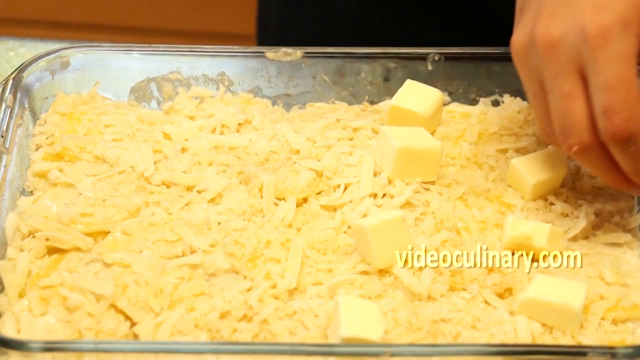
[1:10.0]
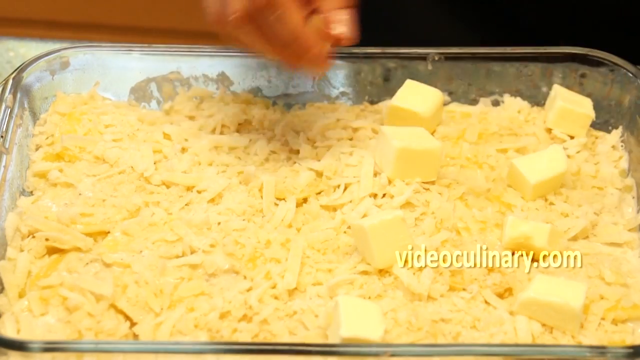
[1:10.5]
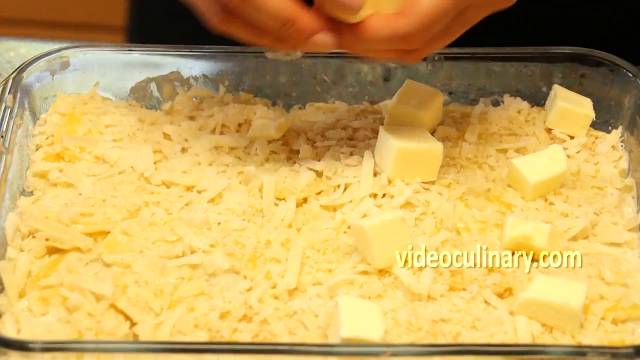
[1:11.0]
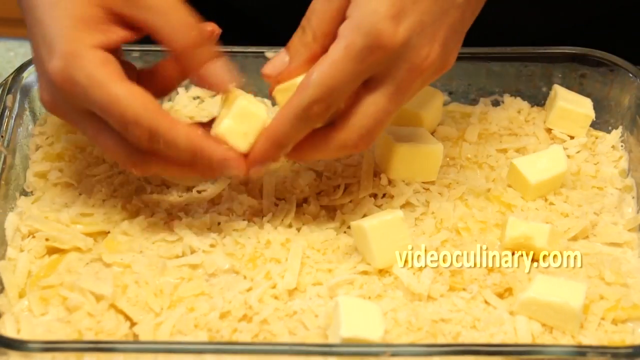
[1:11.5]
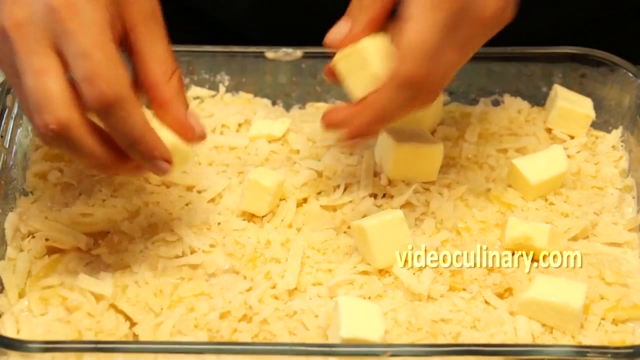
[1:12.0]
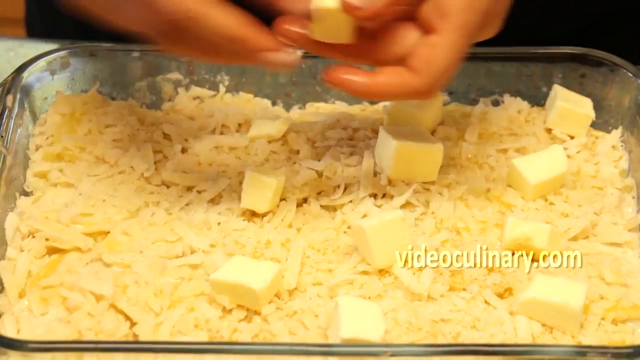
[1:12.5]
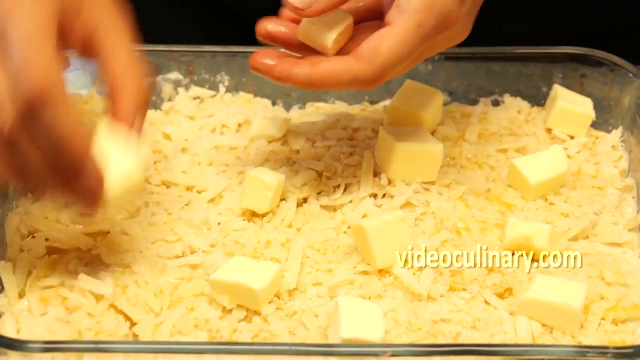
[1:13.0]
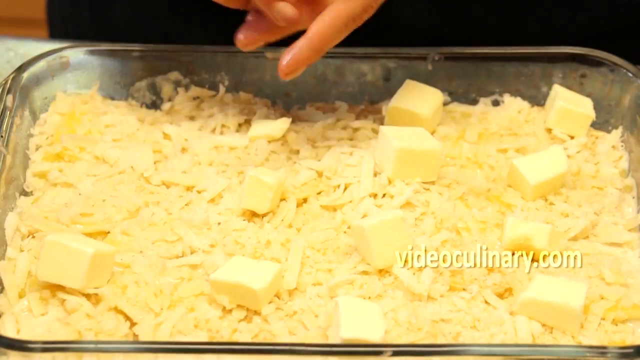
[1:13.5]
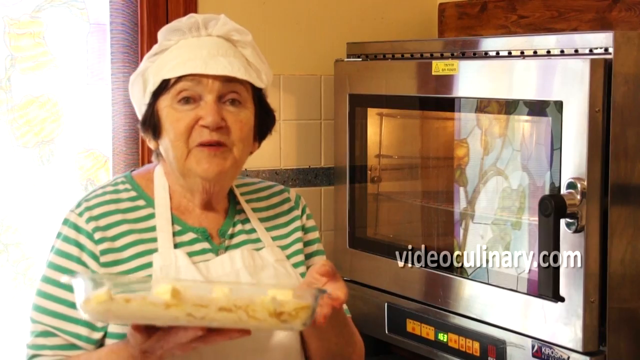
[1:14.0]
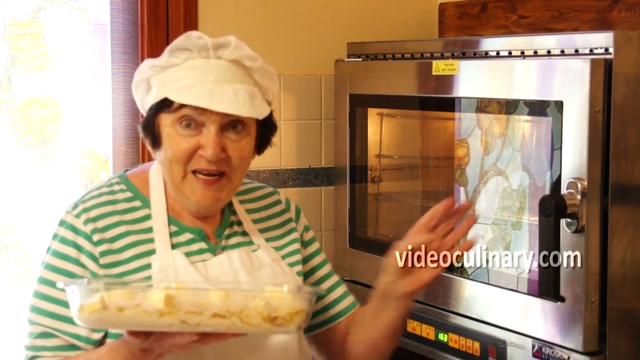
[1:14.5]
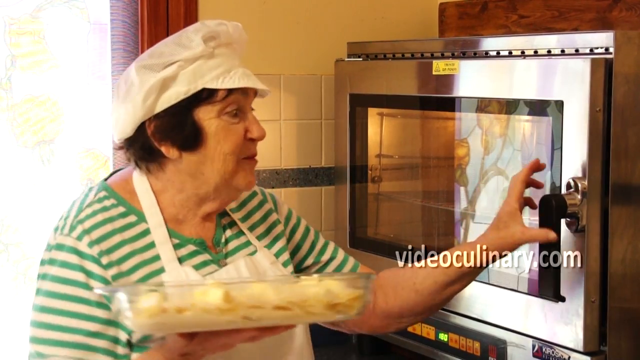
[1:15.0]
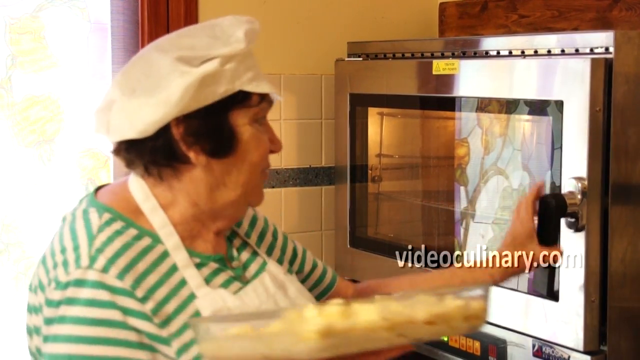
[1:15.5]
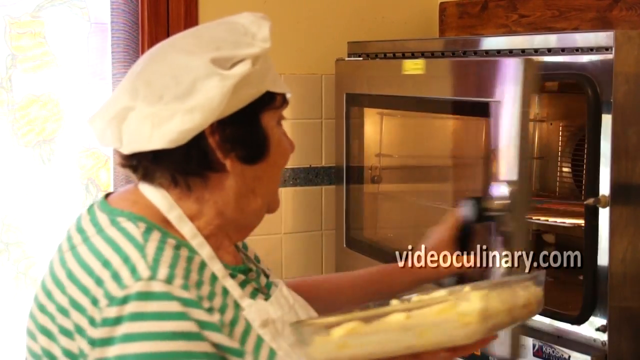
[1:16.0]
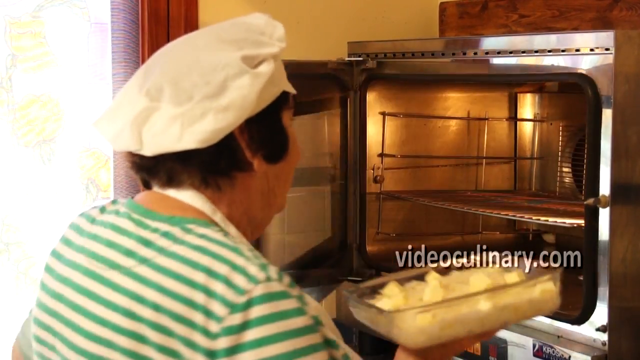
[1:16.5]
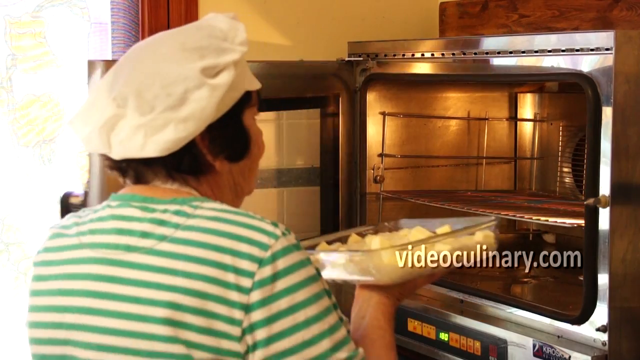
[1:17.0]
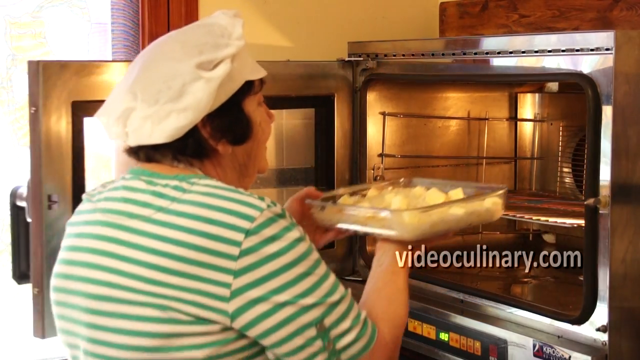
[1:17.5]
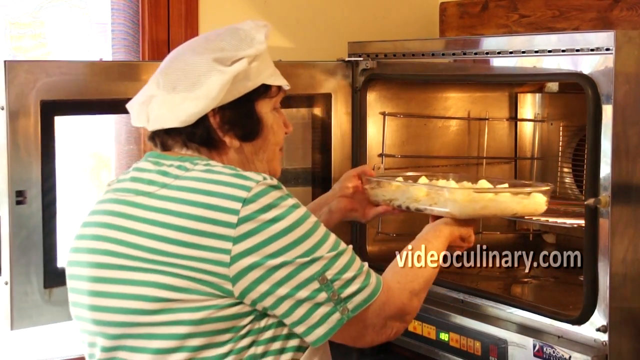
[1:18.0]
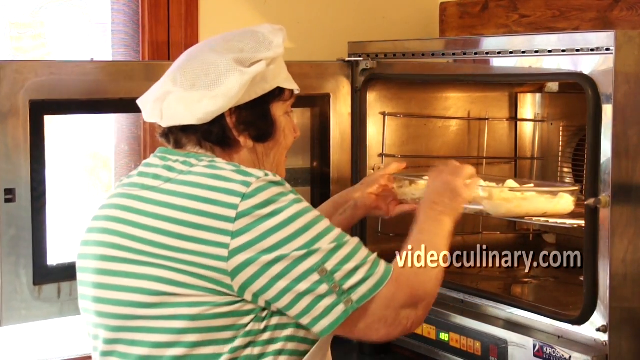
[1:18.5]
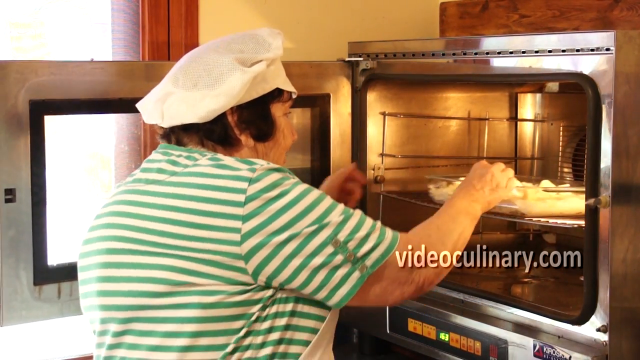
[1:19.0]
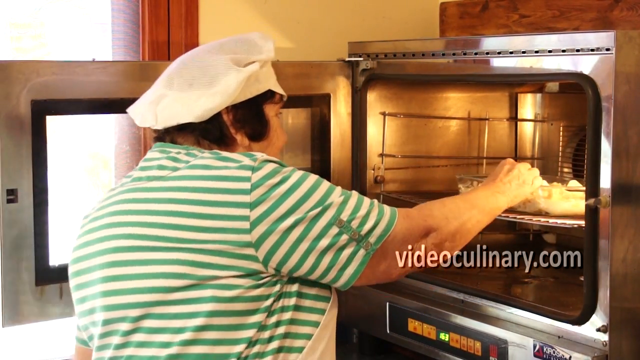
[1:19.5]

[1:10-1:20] A couple of hands put little cut-up pieces of butter on top of the potato gratin, which is covered in cheese in the rectangular glass bowl. The hands cut pieces from what looks like a stick of butter and arrange them all over the bowl. The shot then cuts to the older woman in a white hat and white apron, holding the potato gratin in her right hand and gesturing. She reaches over to what looks like an oven, a commercial-grade stainless steel oven with a handle on the right and a window. She grabs the handle with her left hand, opens the oven, and puts the bowl of potato gratin on the shelf in the oven.